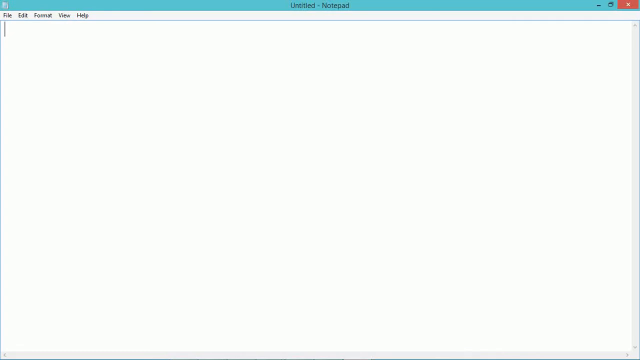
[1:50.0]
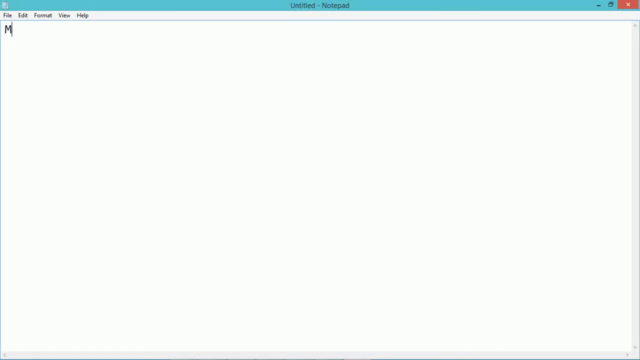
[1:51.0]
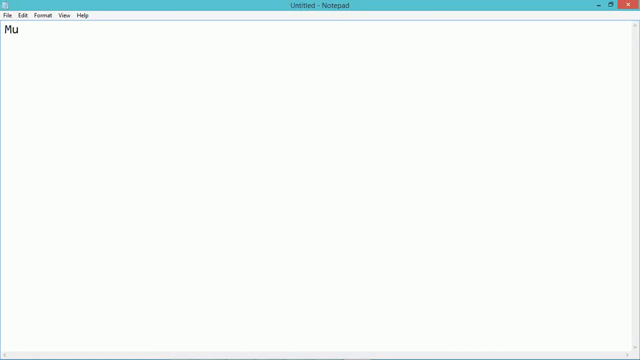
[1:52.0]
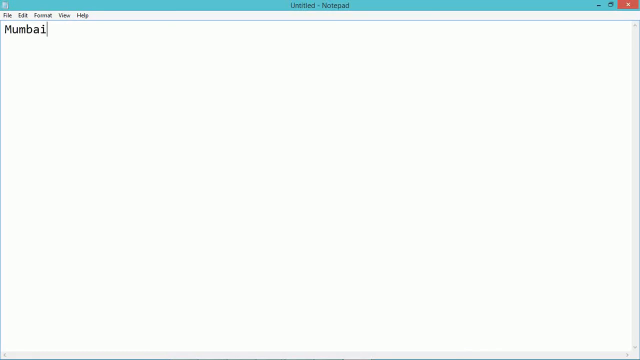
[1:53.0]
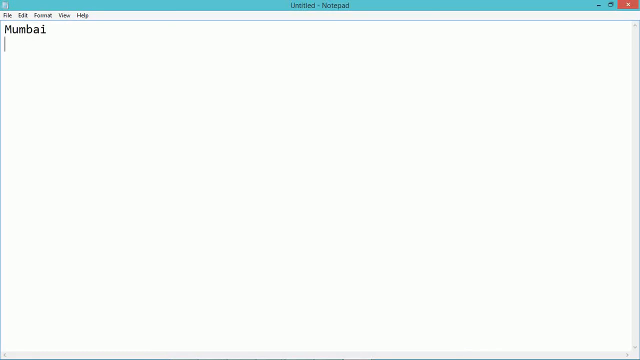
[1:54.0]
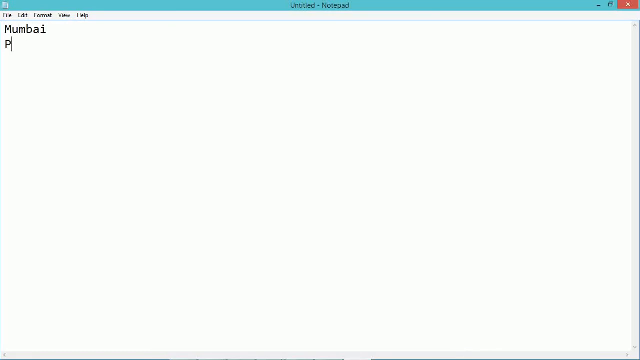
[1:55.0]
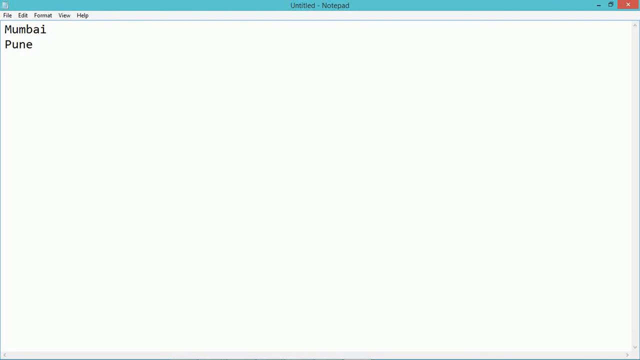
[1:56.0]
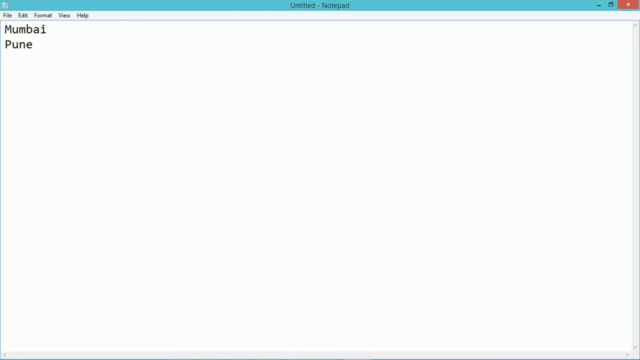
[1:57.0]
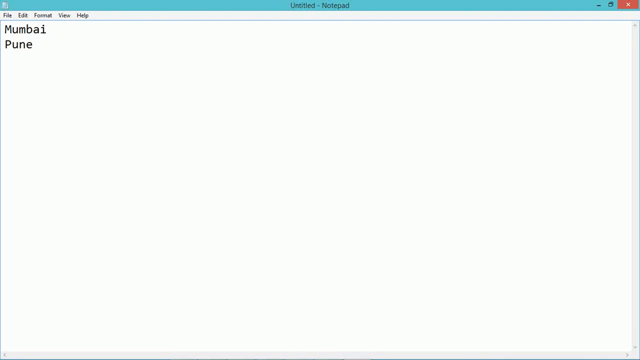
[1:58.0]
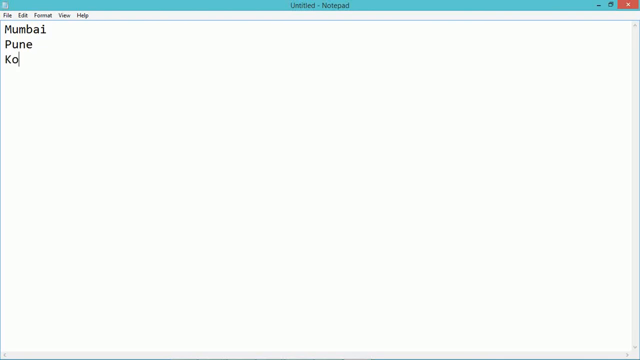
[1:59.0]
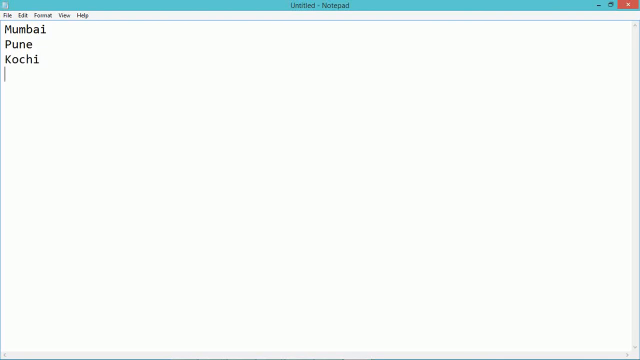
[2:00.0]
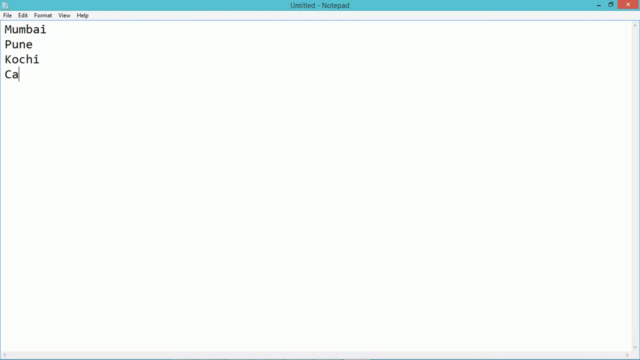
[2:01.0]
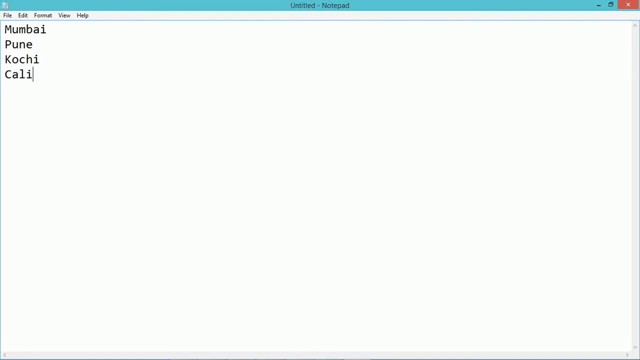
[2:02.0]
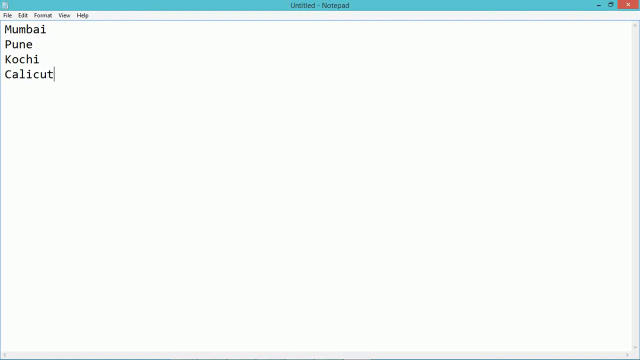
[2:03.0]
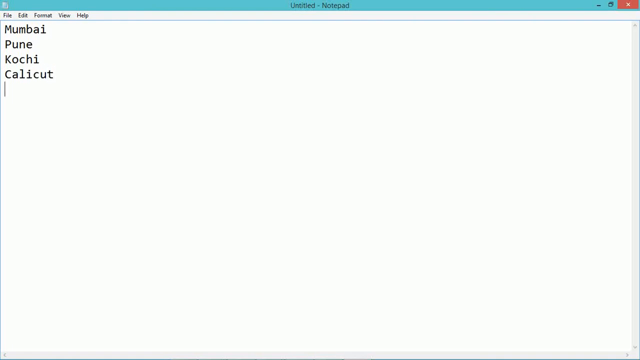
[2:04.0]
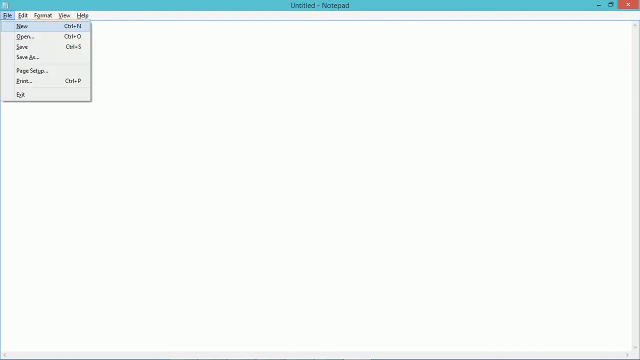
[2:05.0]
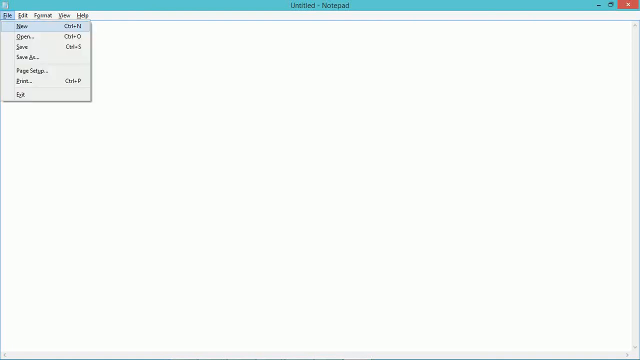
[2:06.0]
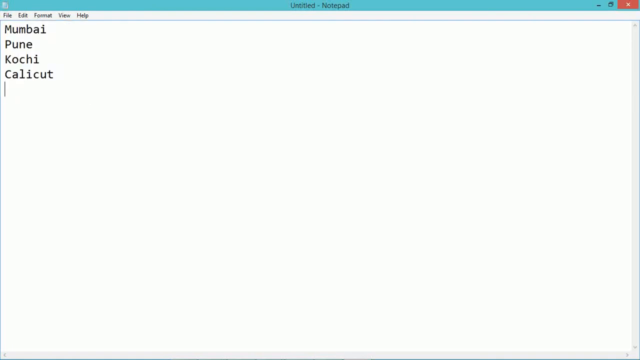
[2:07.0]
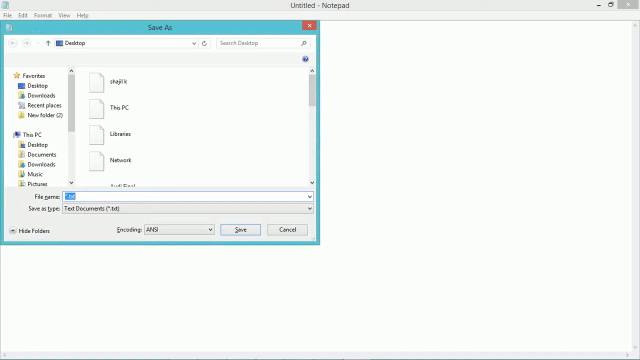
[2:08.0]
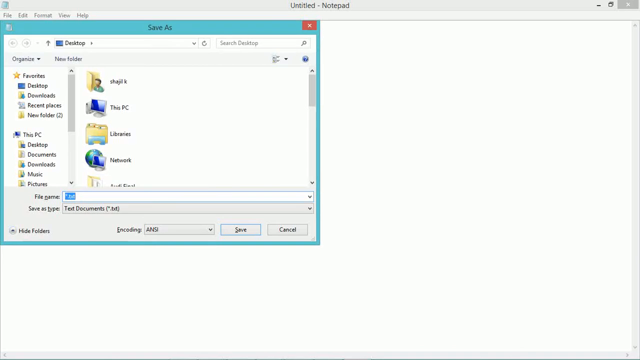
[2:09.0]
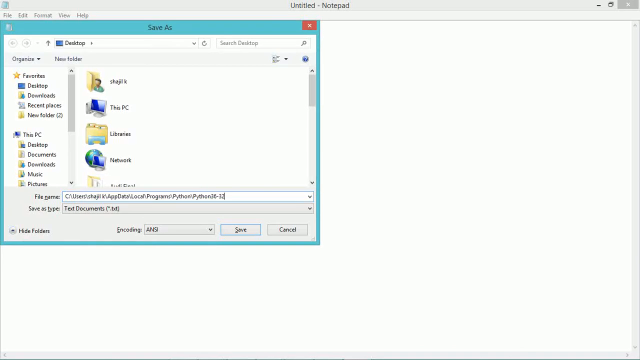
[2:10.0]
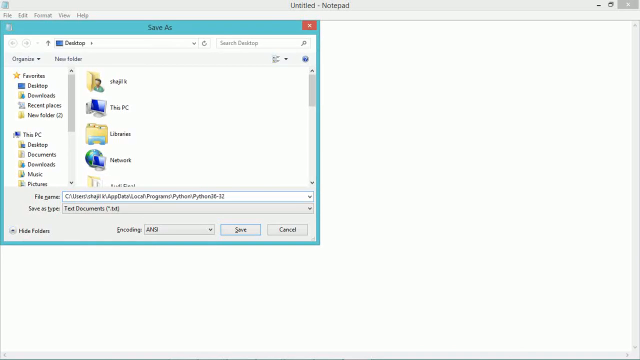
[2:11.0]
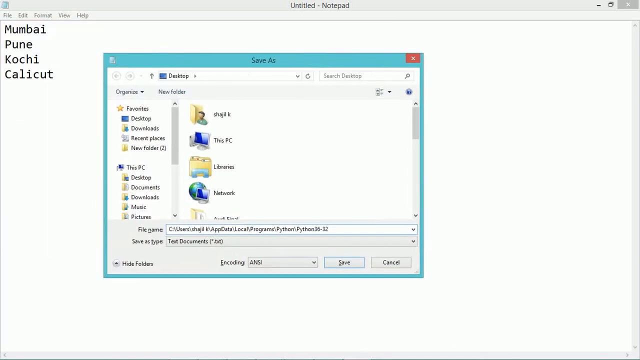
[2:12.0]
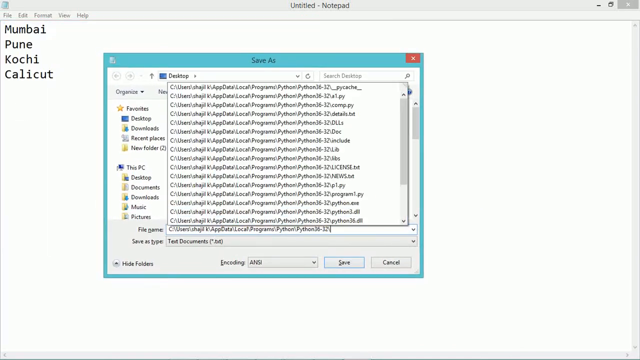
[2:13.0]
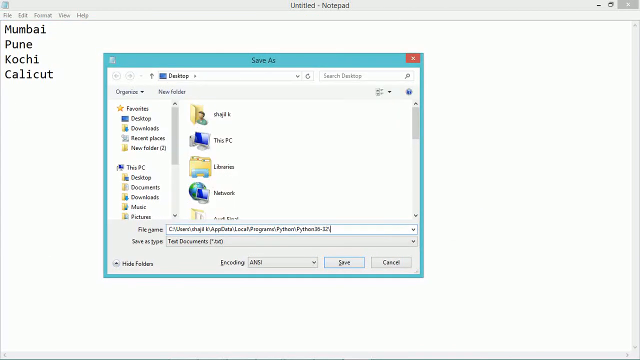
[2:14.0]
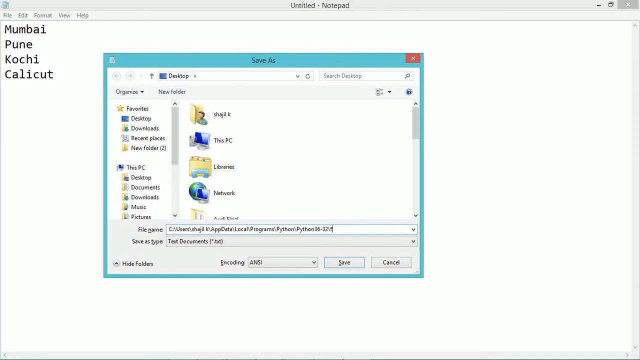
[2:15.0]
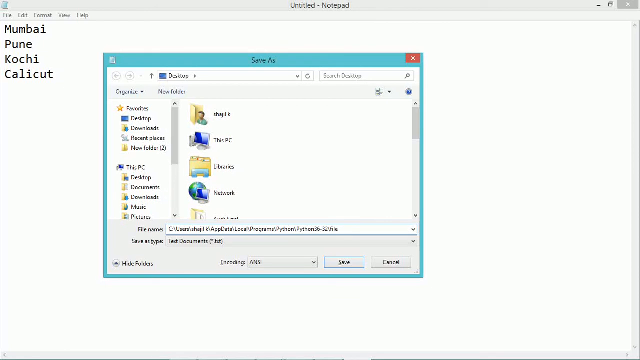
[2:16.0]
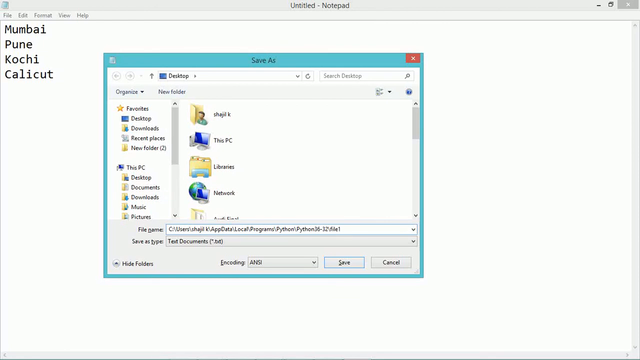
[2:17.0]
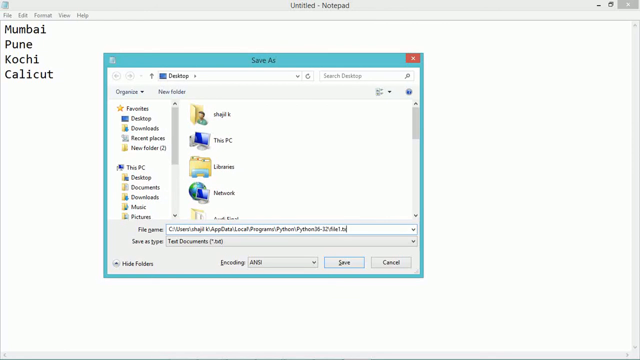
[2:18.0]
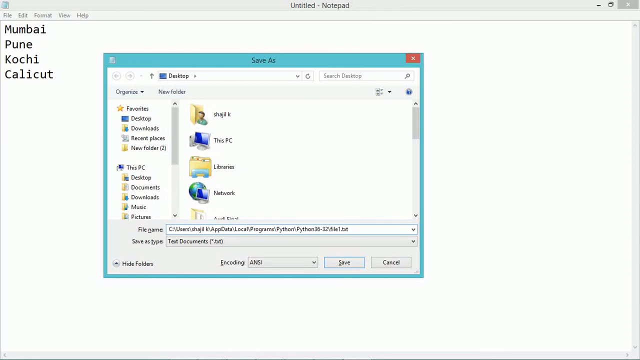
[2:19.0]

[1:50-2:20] The user maximizes the Notepad window to full screen. At the top it says "Untitled Notepad", the file not yet having been named. The main options, File, Edit, Format, View and Help, are at the top left. The user types names: Mumbai, followed by Pune, Kochi and Calicut. The user then clicks the File option at the top left, which shows New, Open, Save, Save As, Page Setup, Print and Exit, with keyboard shortcuts shown for New, Open, Save and Print. The user clicks Save As, and the desktop section of the file explorer appears for saving the file. The file is saved as a txt file, and the user enters the directory of the Python program created earlier.